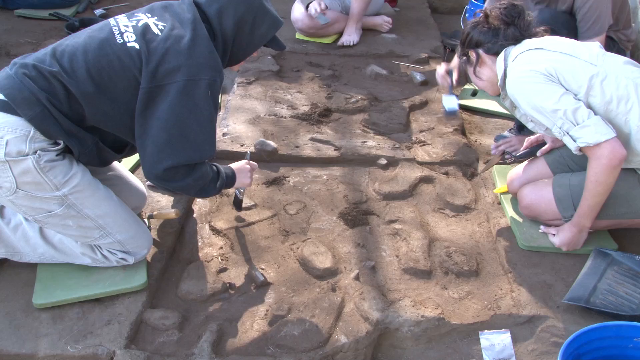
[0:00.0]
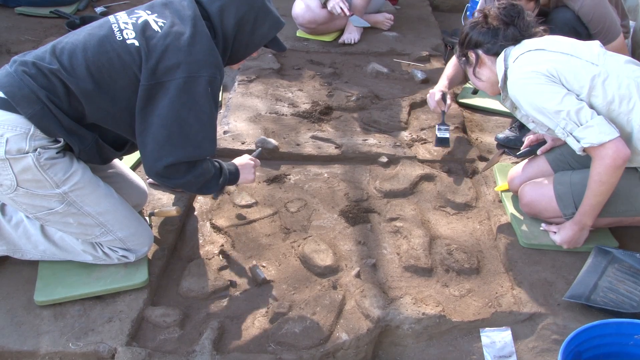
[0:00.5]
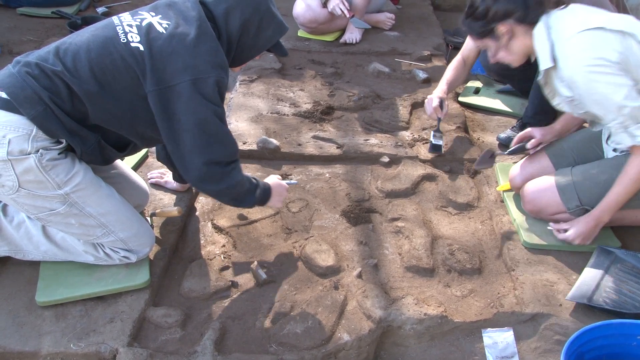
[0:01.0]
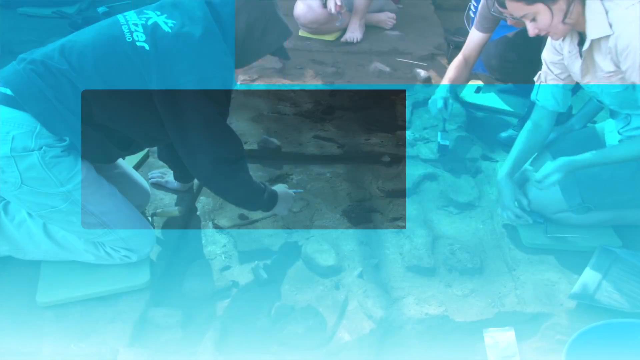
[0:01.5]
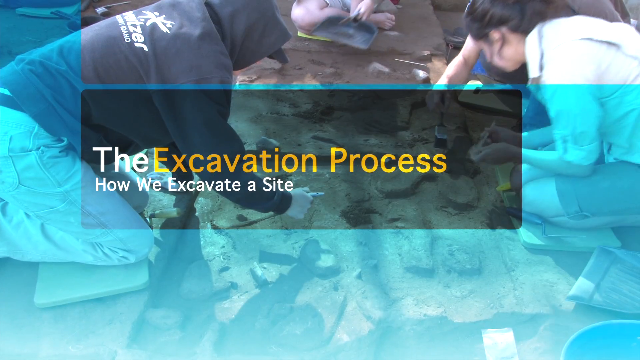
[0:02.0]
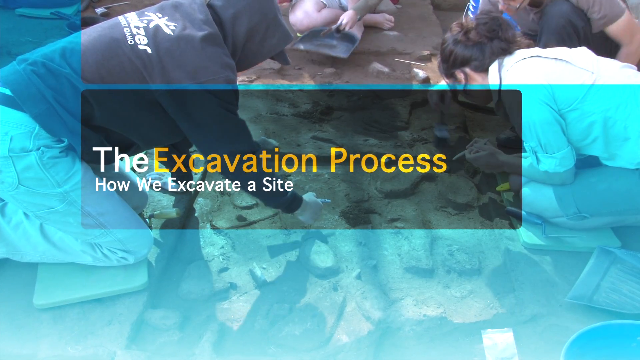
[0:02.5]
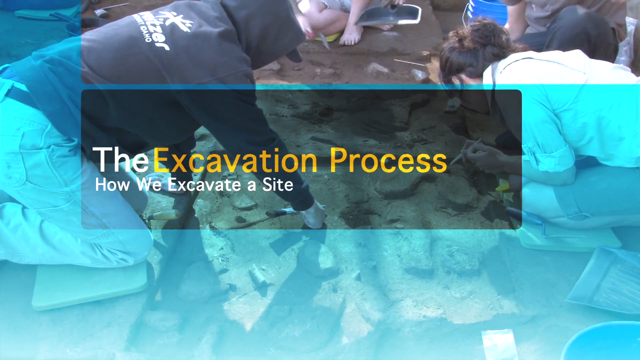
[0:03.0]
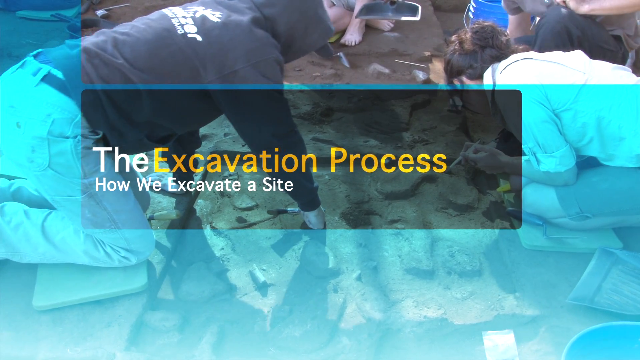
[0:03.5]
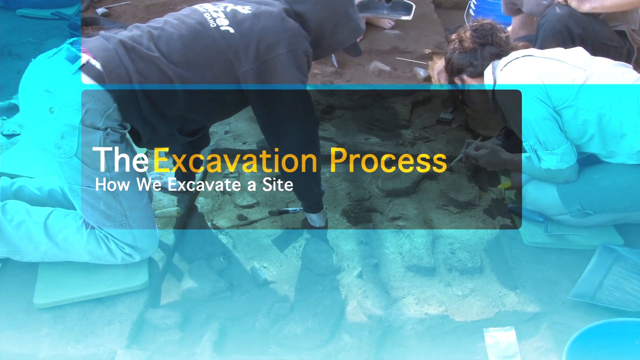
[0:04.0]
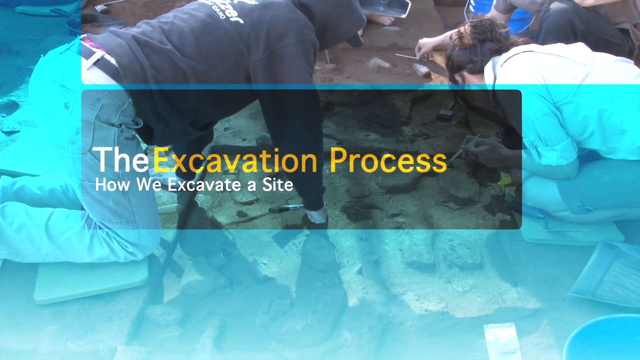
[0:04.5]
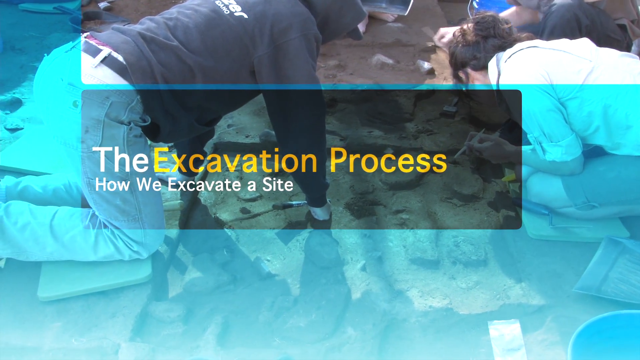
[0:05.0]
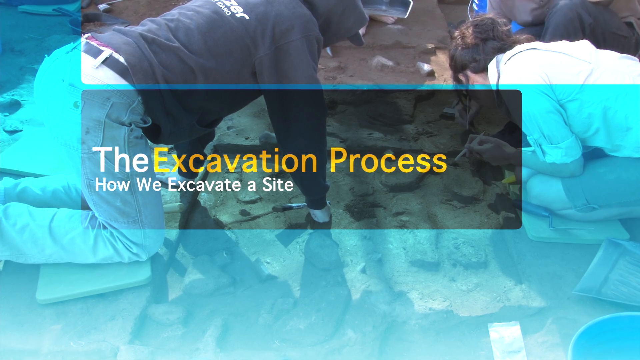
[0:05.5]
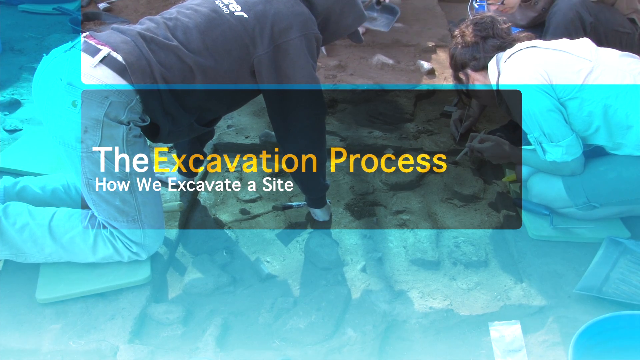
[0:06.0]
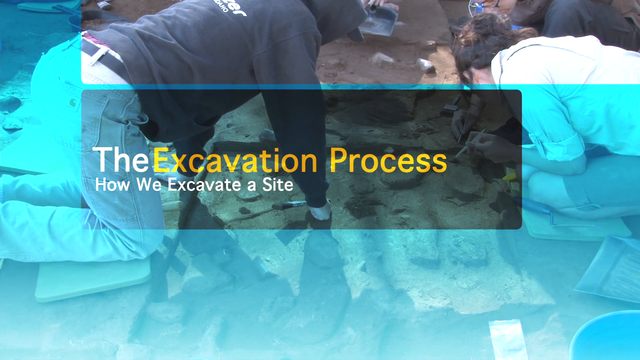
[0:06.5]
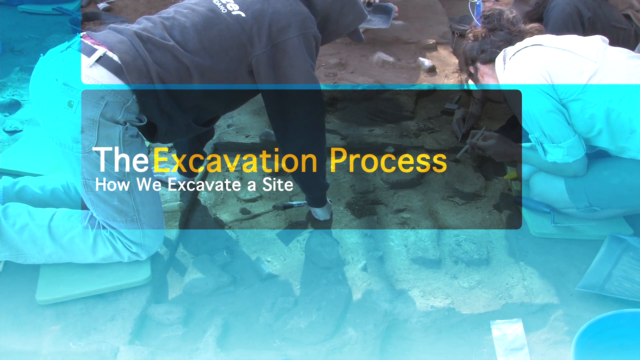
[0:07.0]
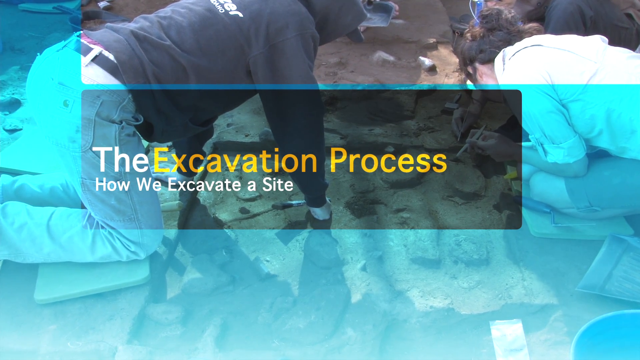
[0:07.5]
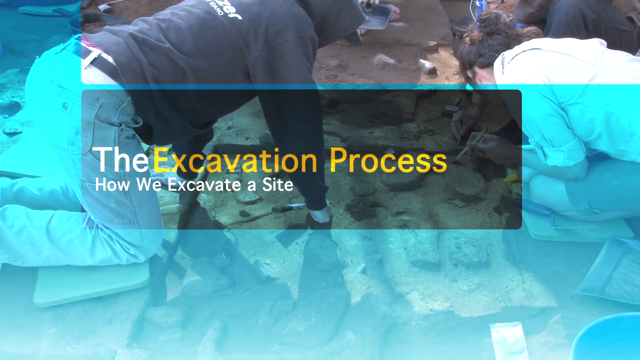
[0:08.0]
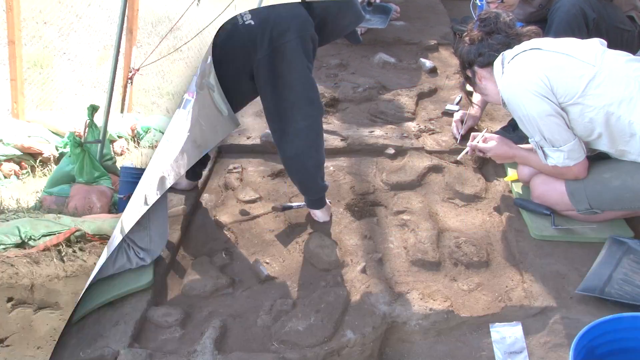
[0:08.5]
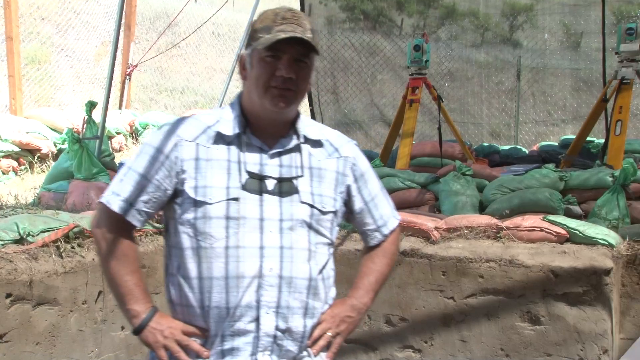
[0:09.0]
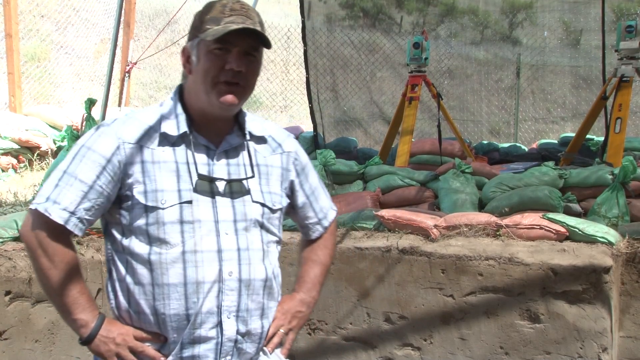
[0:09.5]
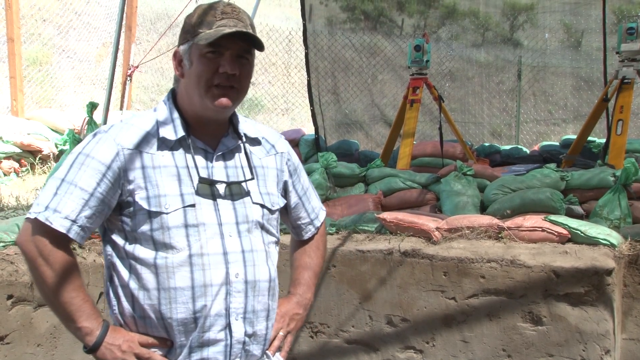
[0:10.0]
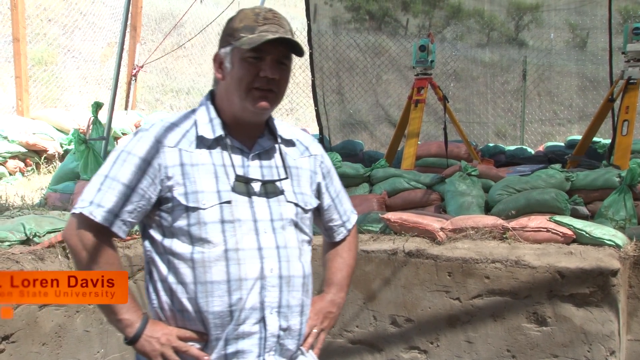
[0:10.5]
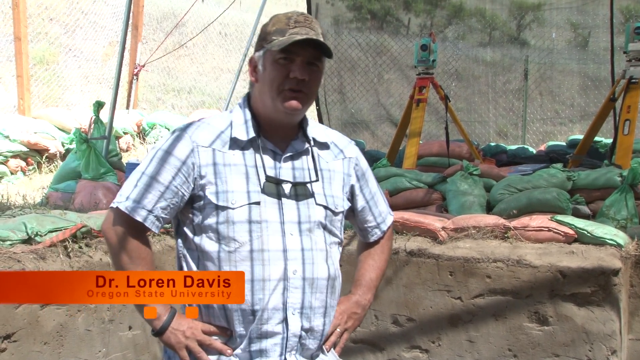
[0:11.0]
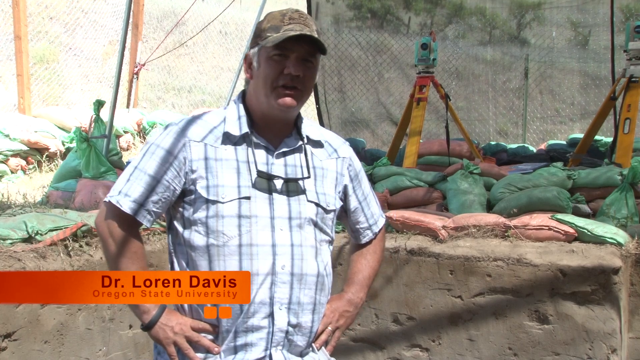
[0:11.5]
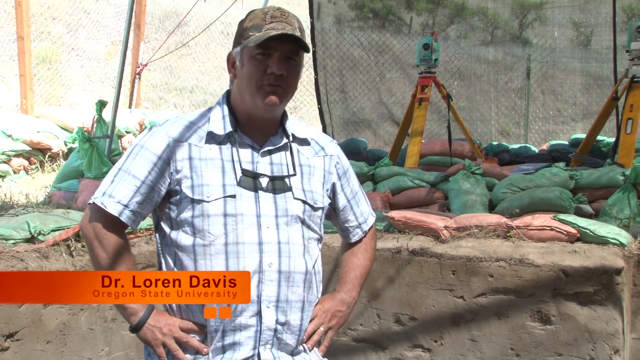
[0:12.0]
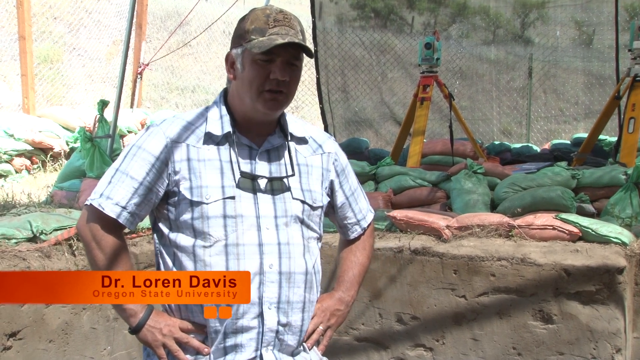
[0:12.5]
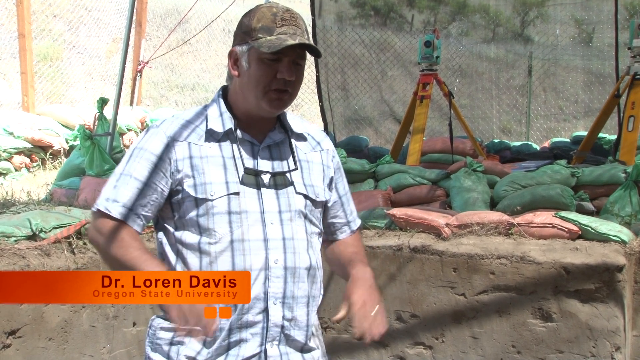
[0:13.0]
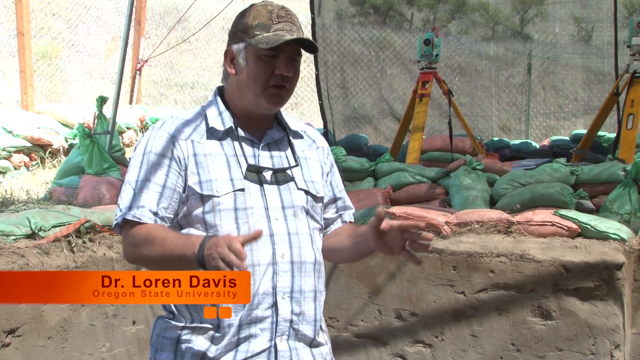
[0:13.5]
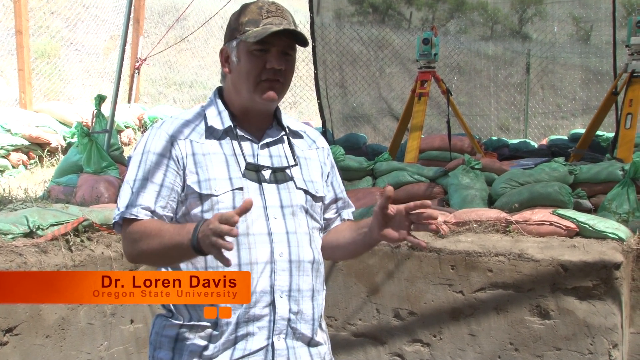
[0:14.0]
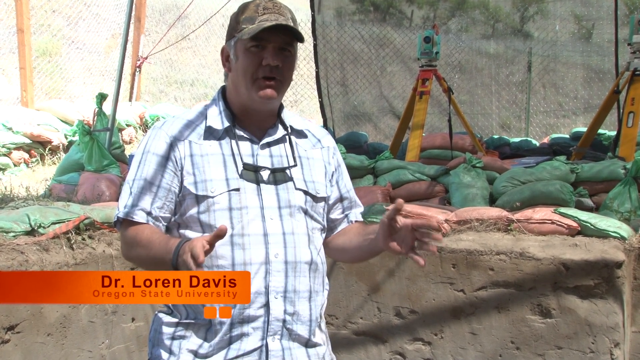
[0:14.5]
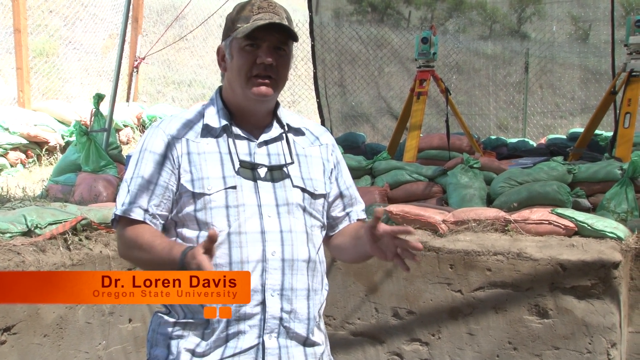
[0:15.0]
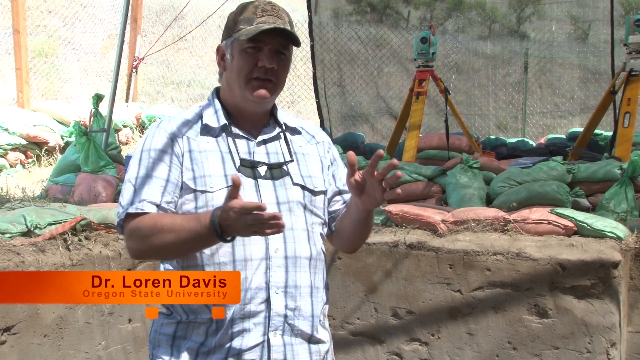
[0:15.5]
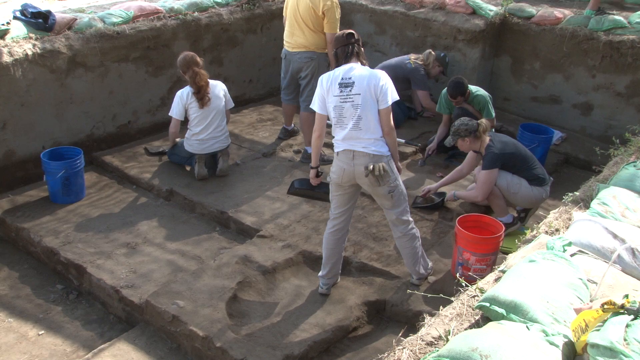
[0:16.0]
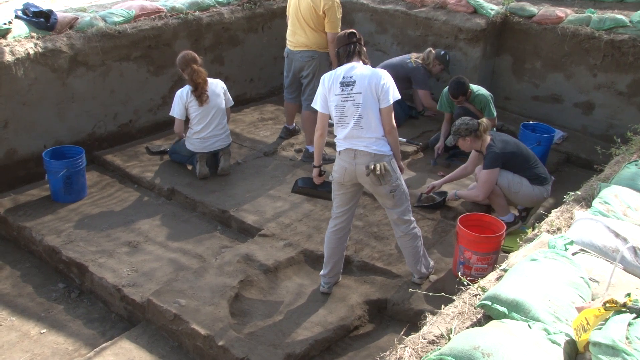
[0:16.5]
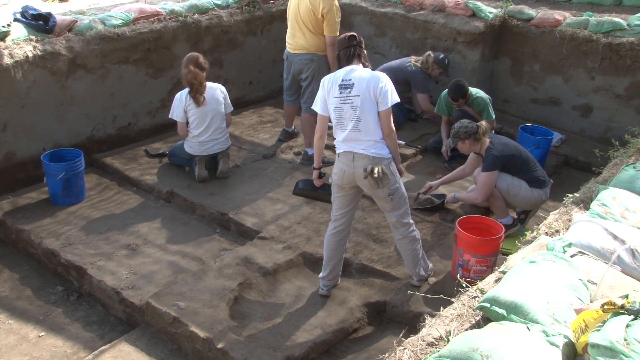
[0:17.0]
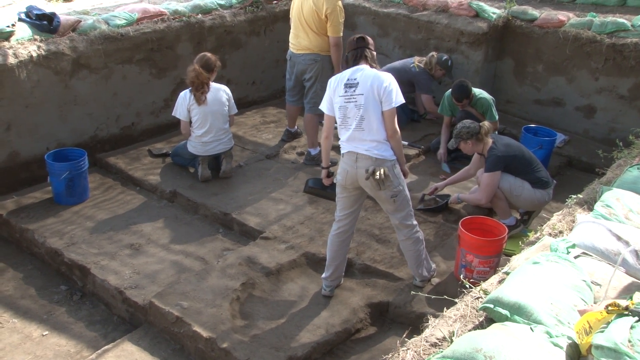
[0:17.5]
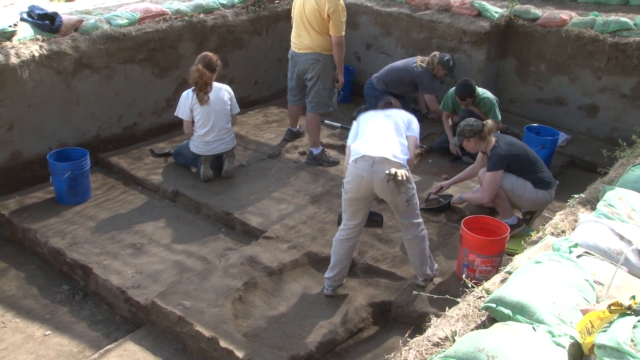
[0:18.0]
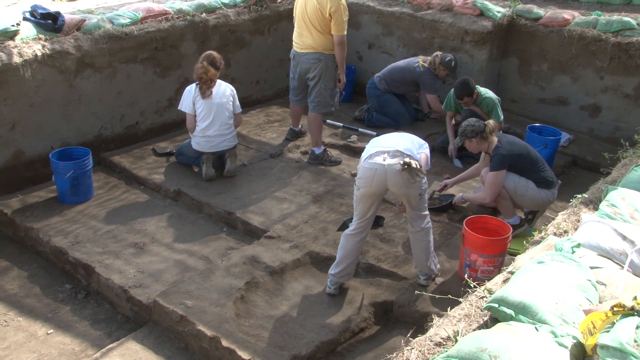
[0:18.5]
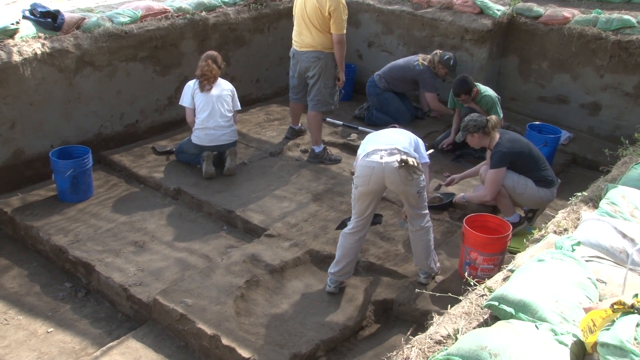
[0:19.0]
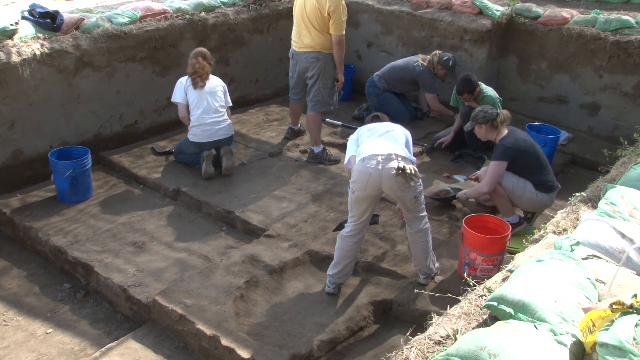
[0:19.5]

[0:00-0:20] The scene is possibly an archaeological dig. A lady in a white shirt on the right kneels on a green pad; everyone's knees are on green pads. A guy, possibly on the left side, wears a gray-blue jacket. They are brushing things and looking at some type of artifacts. Text in yellow and white letters reads "excavation project process" and "how we excavate a site." The work is very meticulous. A man in a baseball cap and a blue and white shirt then speaks to the camera. In the background there is what looks like sandbags, a fence or tent-like structure, and maybe a camera on tripods set on what look like sandbags at the excavation site. He is identified as Dr. Lauren Davis of Oregon State University, apparently a professor. Students doing the excavation are shown: some in white shirts, one in yellow, one in green, and two in gray-blue. A red bucket and two blue buckets are in the squared-off, dug excavation site.